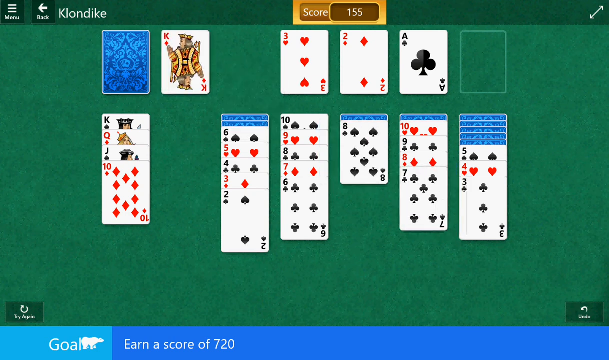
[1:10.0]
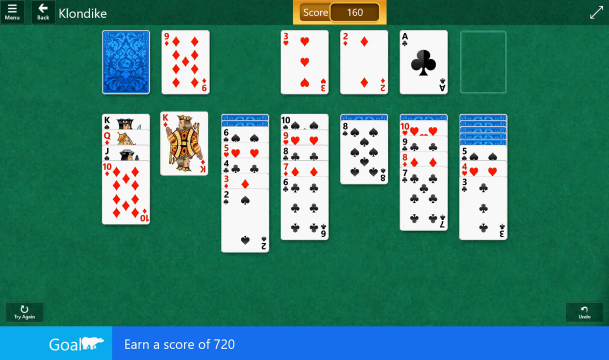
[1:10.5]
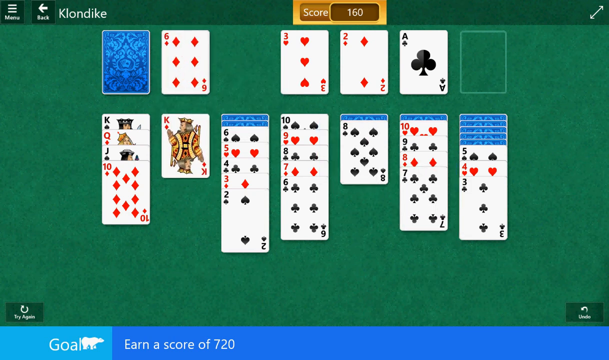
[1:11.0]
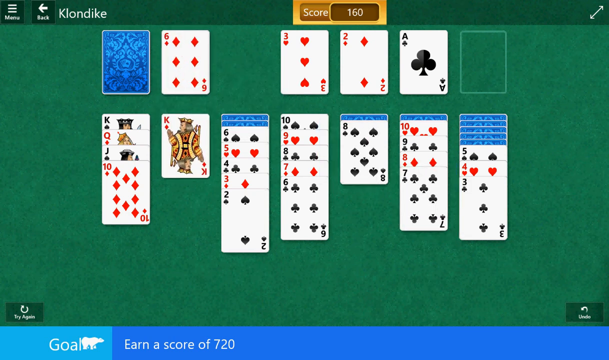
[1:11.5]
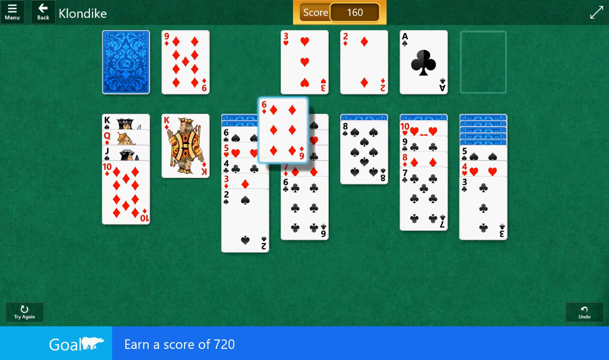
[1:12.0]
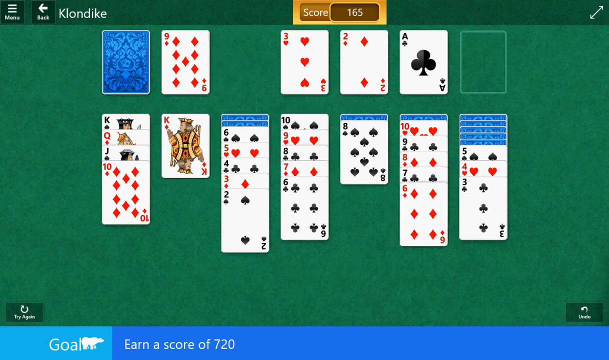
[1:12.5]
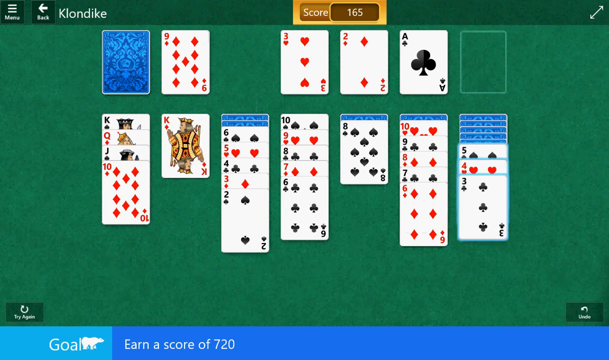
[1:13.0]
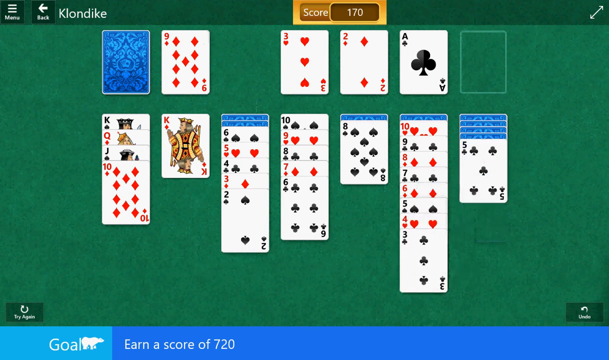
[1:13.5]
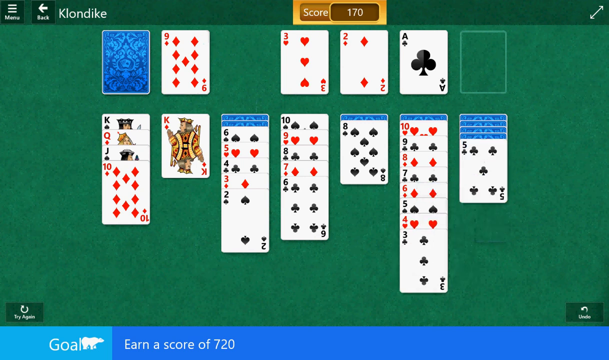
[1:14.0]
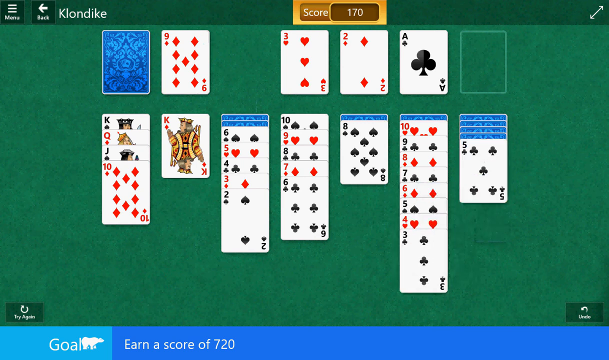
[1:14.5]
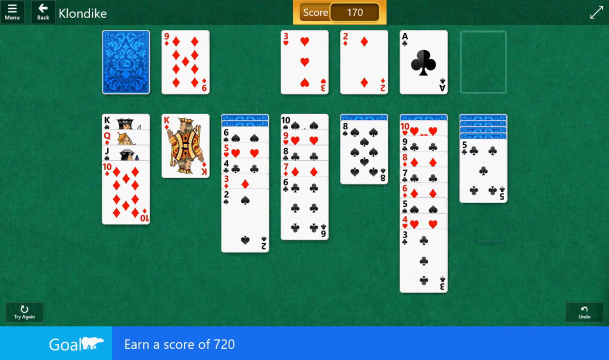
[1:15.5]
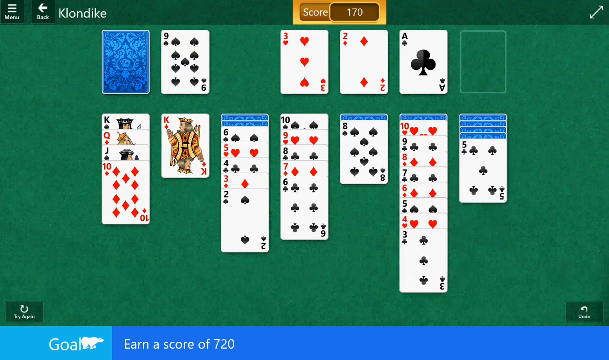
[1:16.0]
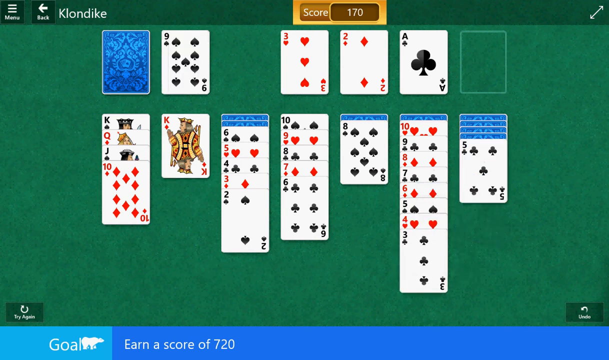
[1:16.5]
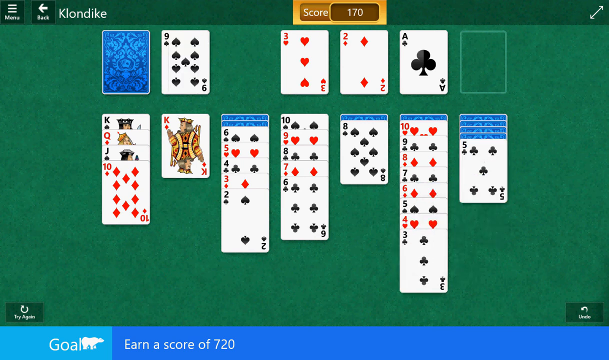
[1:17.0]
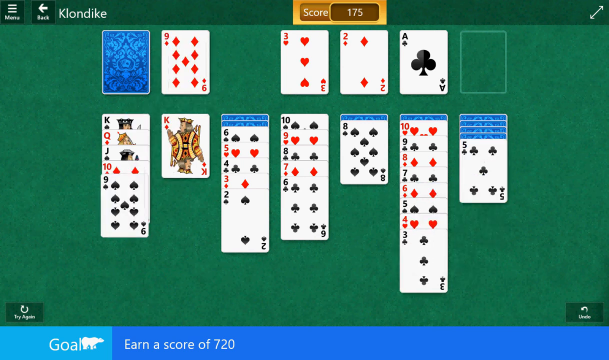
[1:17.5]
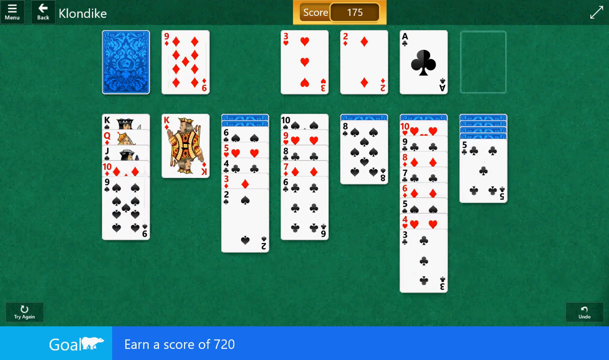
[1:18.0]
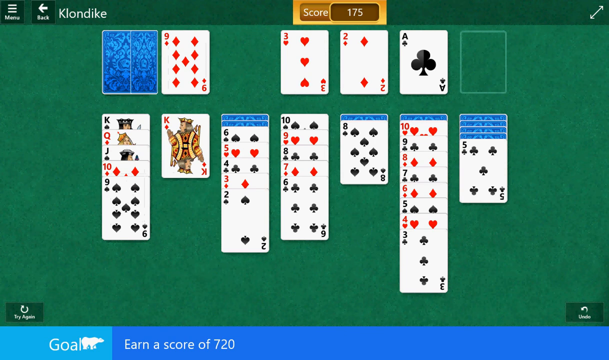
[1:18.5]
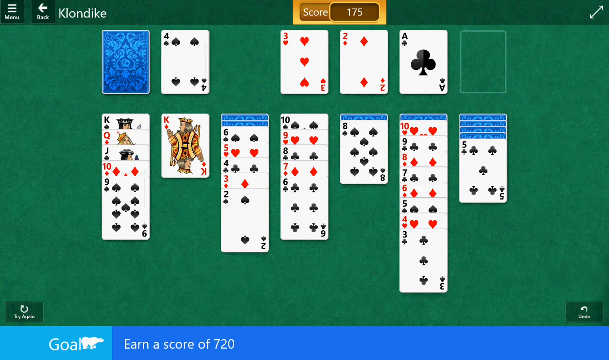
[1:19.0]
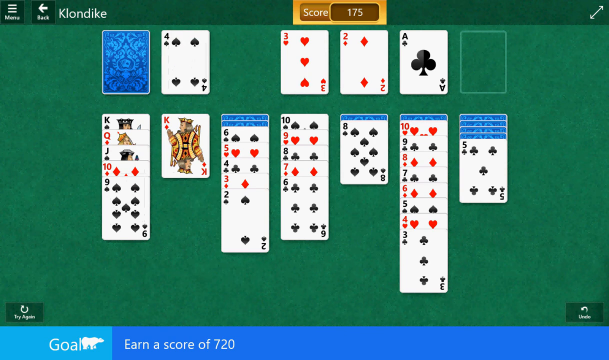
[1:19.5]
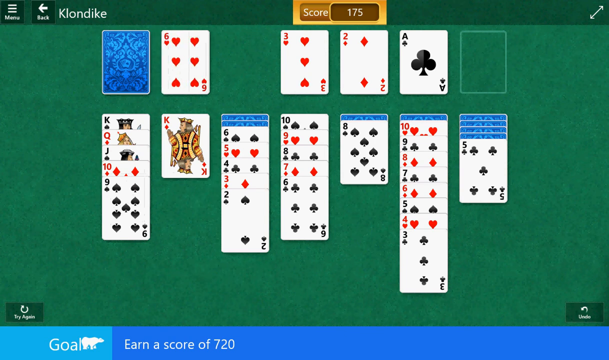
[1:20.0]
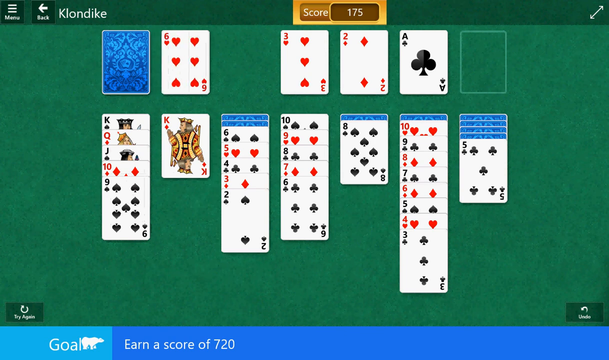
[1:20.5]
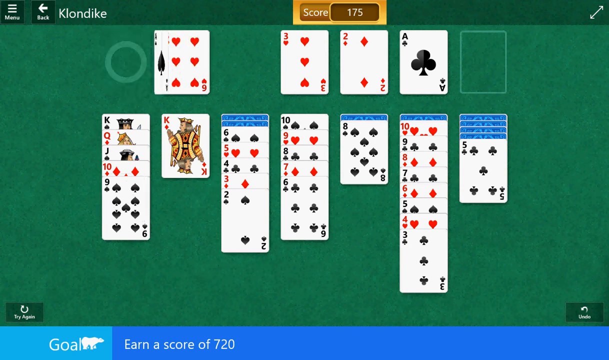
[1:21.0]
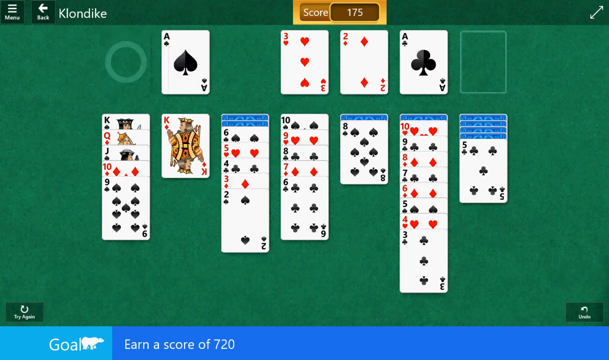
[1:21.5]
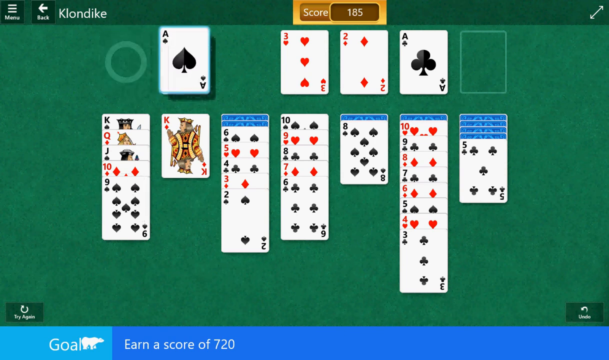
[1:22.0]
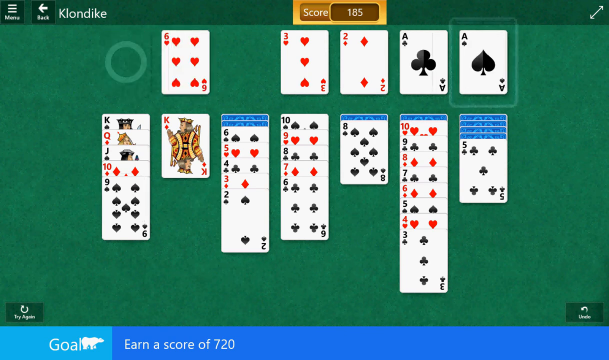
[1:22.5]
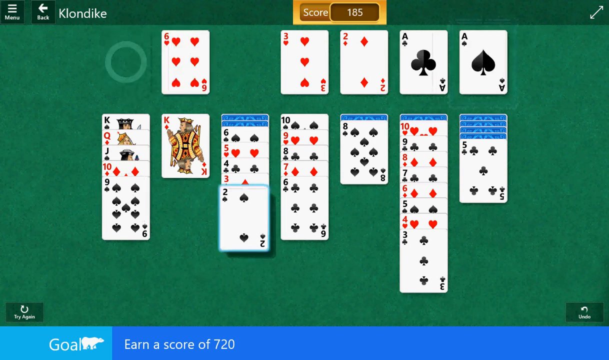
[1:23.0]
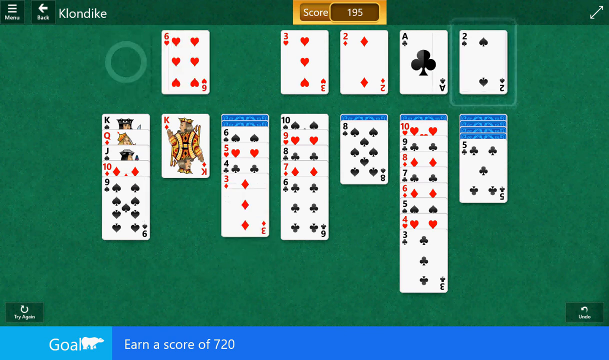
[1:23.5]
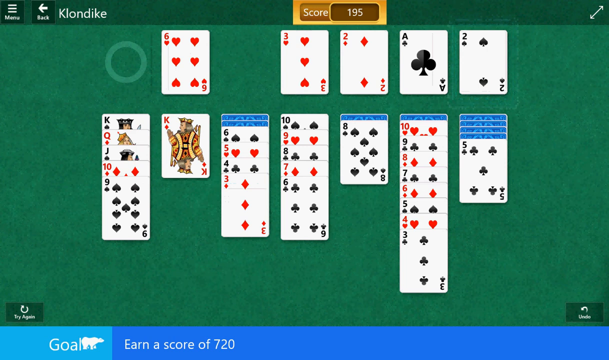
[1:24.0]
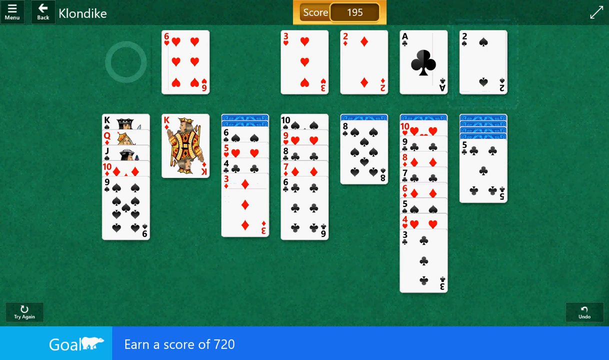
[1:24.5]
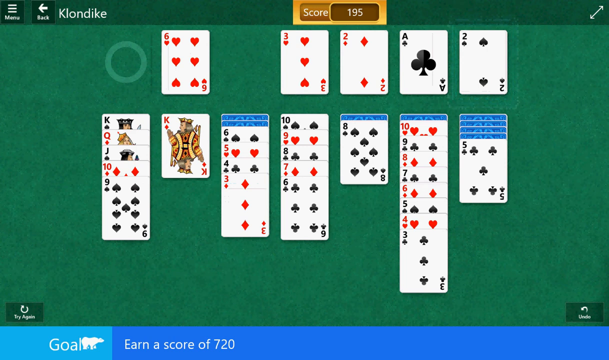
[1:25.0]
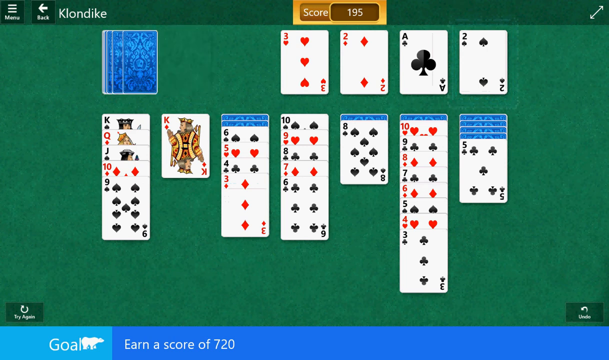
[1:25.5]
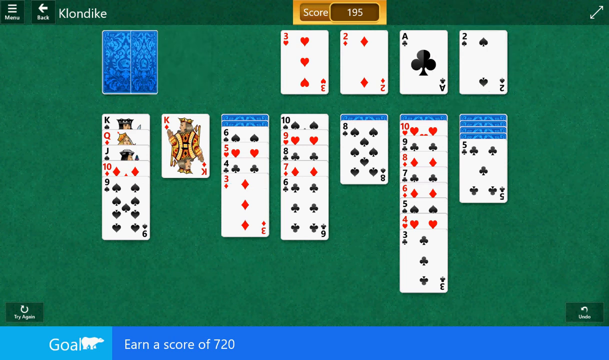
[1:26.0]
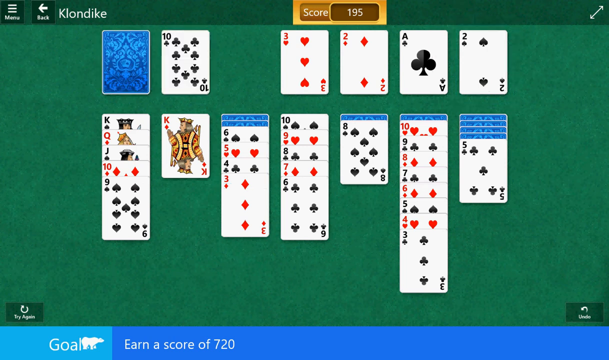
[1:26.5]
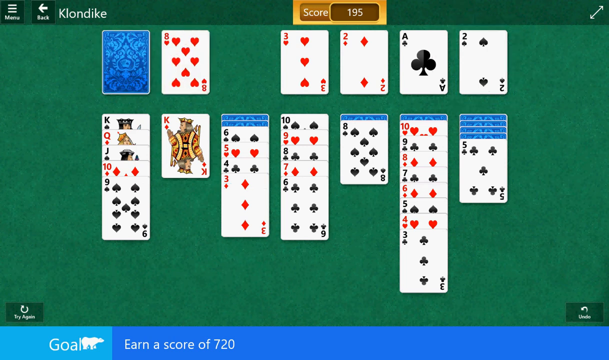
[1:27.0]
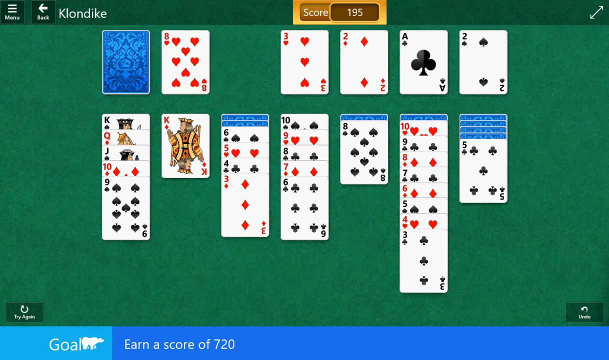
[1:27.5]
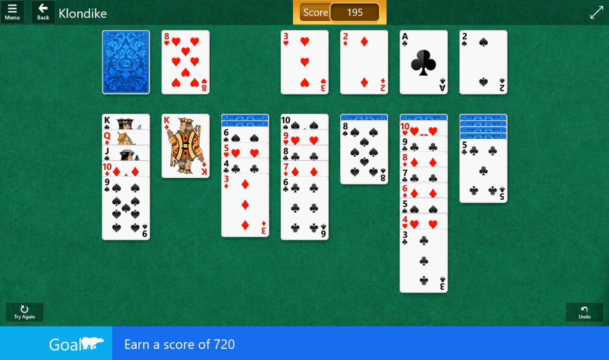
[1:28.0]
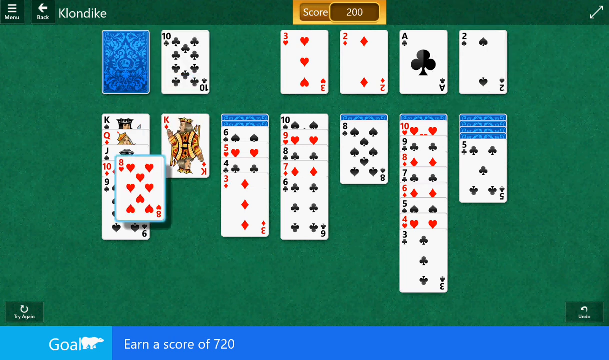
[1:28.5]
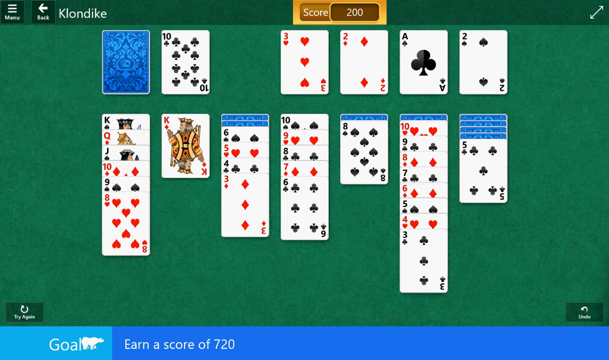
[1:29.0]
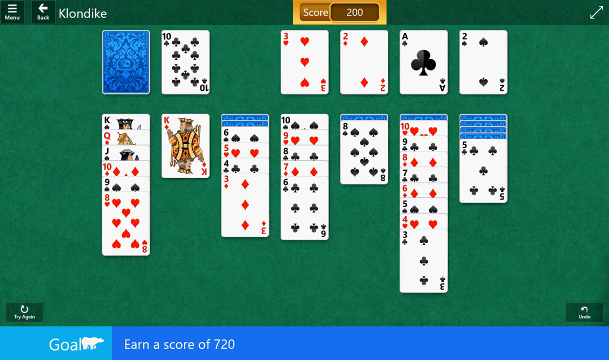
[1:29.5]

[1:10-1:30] Playing cards are laid out on a green mat in a game of Klondike, a form of solitaire. A king is put down. Aces are put up in the right-hand corner: the hearts first, then the diamonds, then the clubs, then a space for another ace. An ace goes up, and then a two is put on it. Cards keep being dealt out, and the score starts at 155 and rises in increments of five until it reaches 195, then 200.